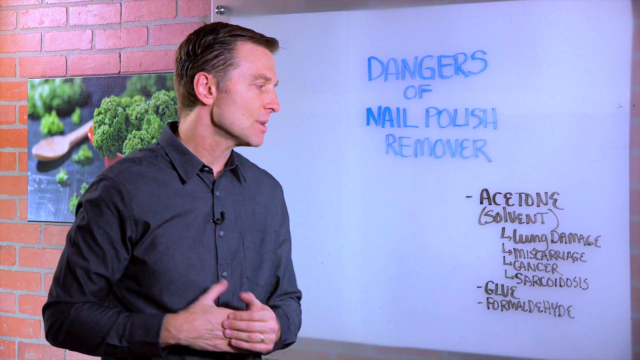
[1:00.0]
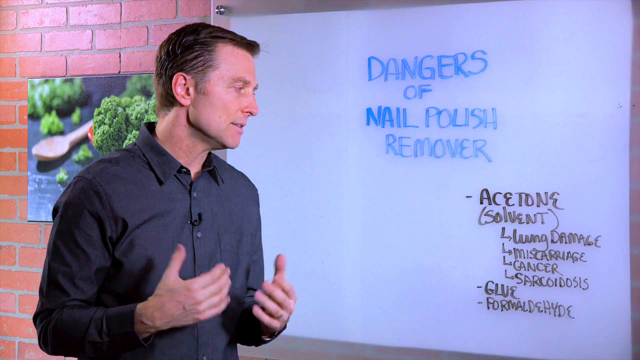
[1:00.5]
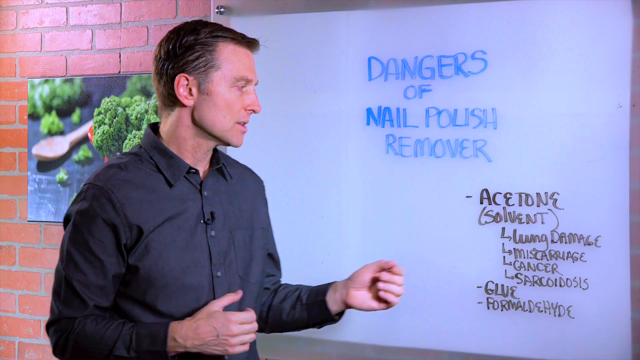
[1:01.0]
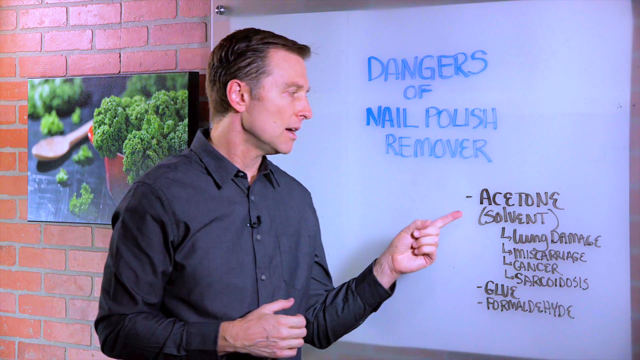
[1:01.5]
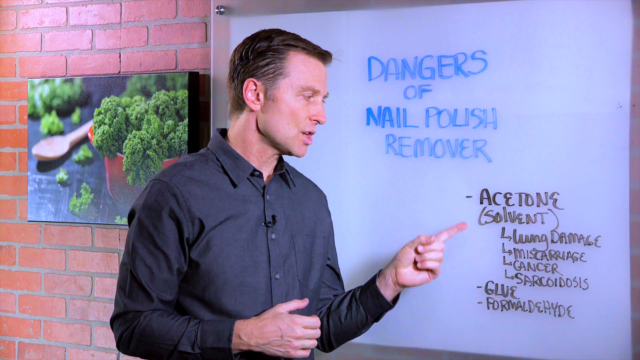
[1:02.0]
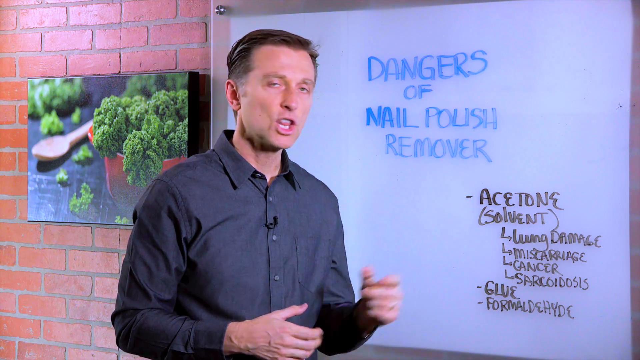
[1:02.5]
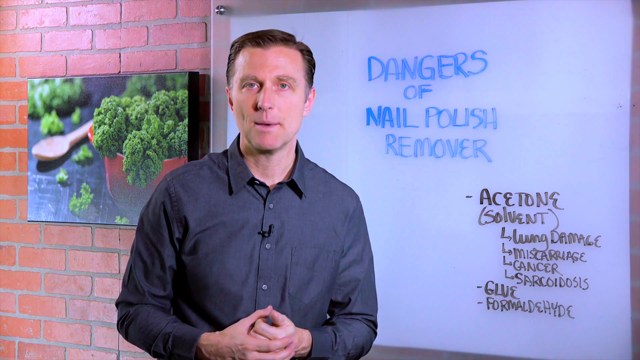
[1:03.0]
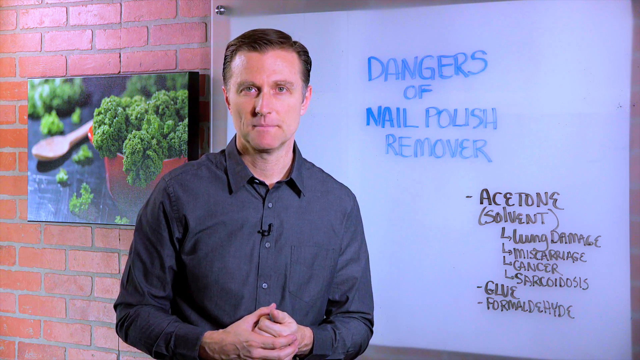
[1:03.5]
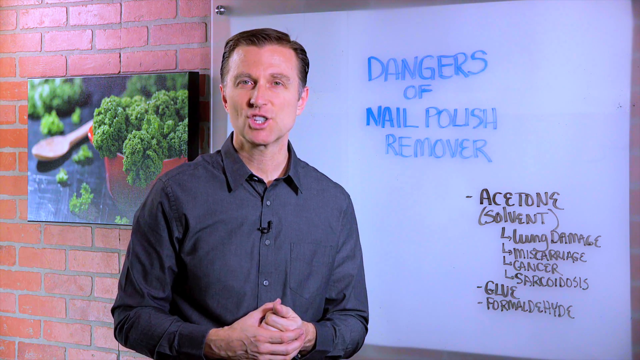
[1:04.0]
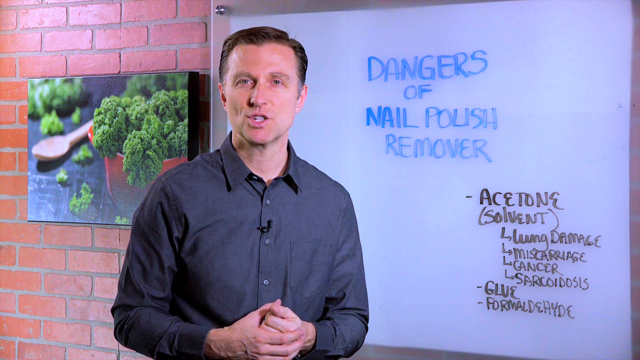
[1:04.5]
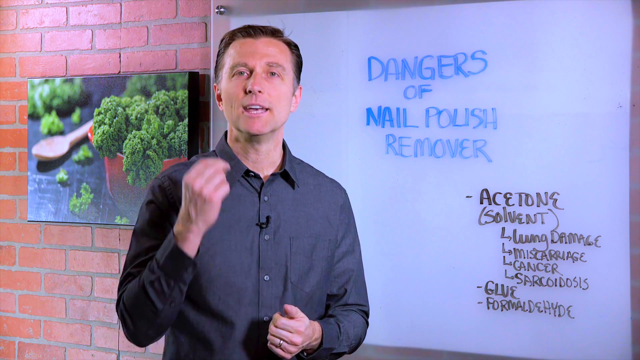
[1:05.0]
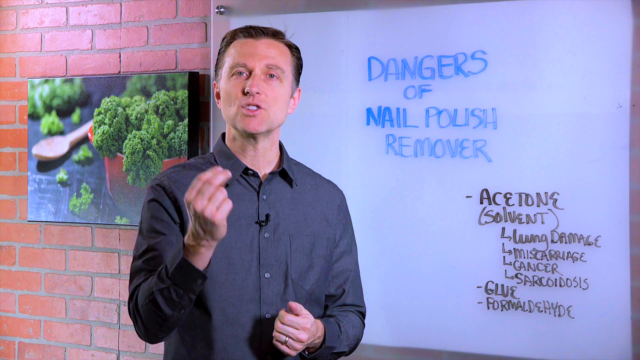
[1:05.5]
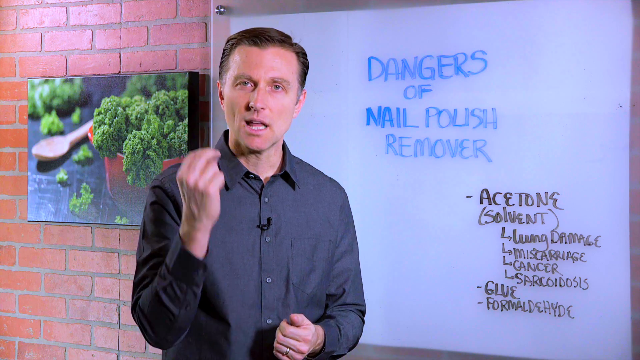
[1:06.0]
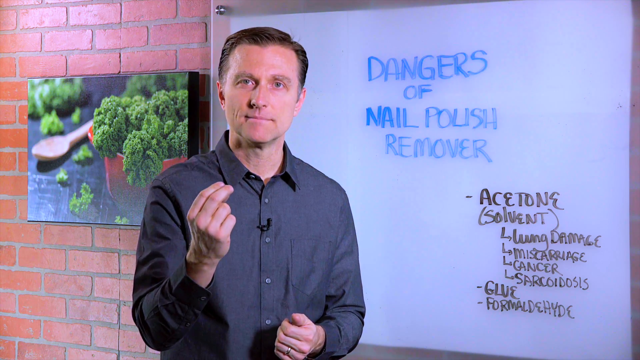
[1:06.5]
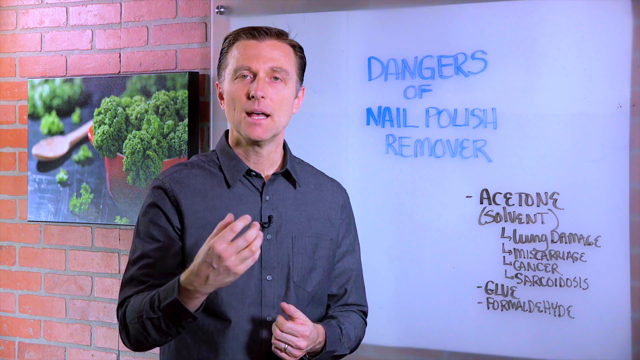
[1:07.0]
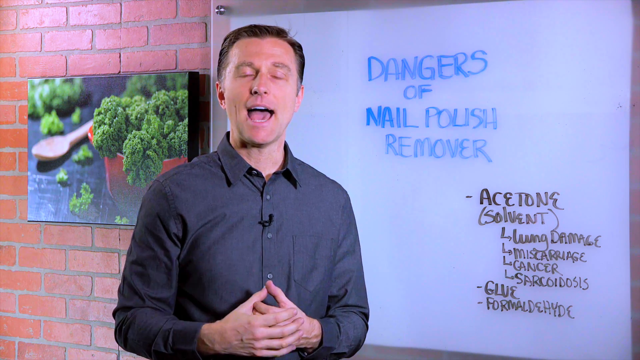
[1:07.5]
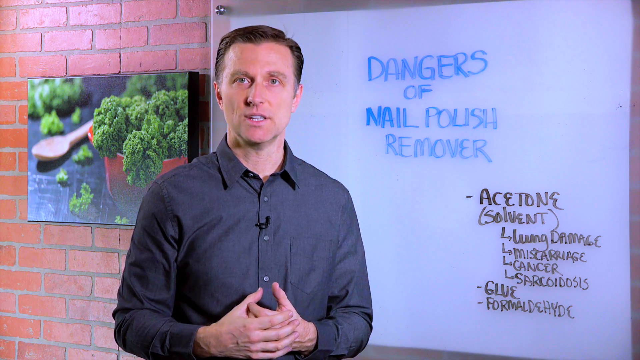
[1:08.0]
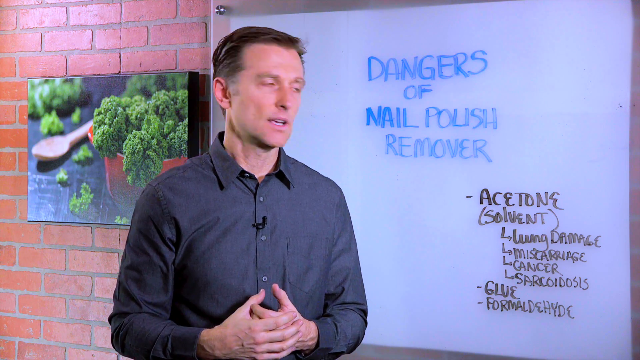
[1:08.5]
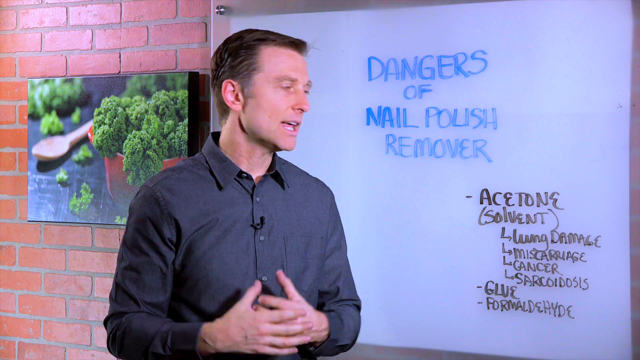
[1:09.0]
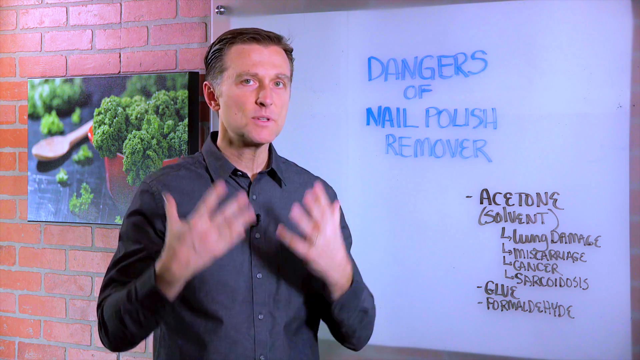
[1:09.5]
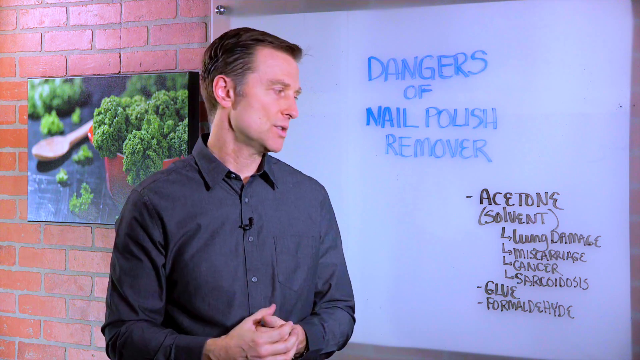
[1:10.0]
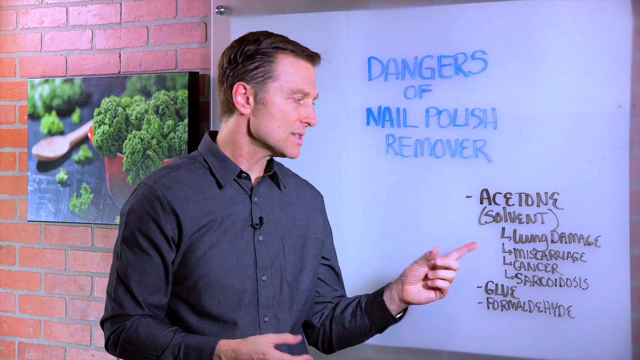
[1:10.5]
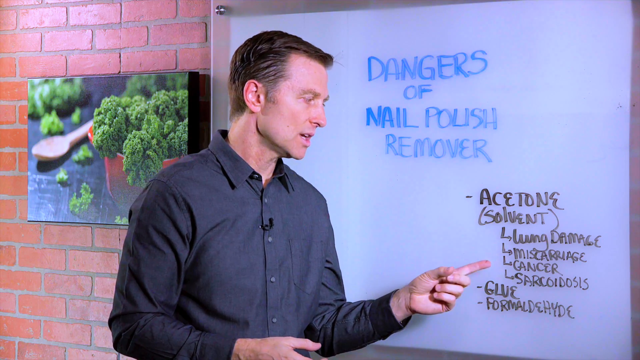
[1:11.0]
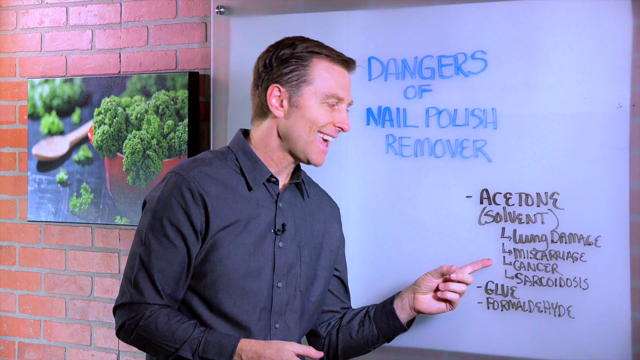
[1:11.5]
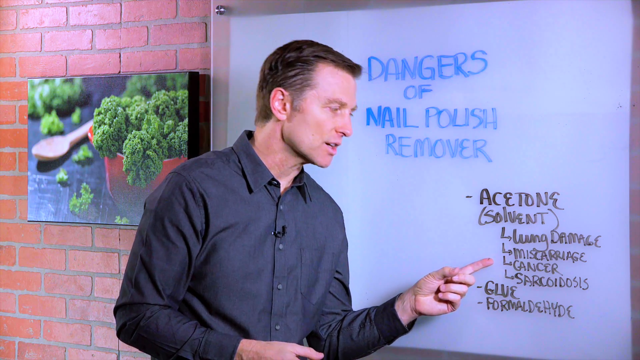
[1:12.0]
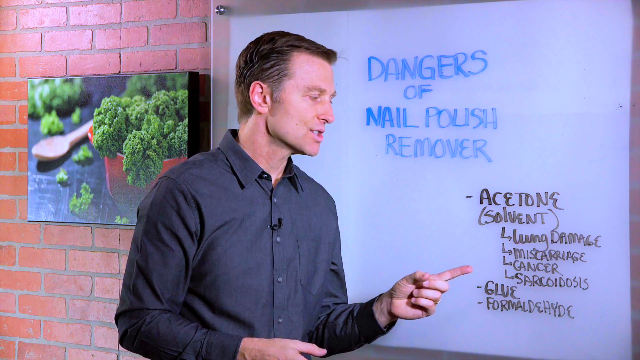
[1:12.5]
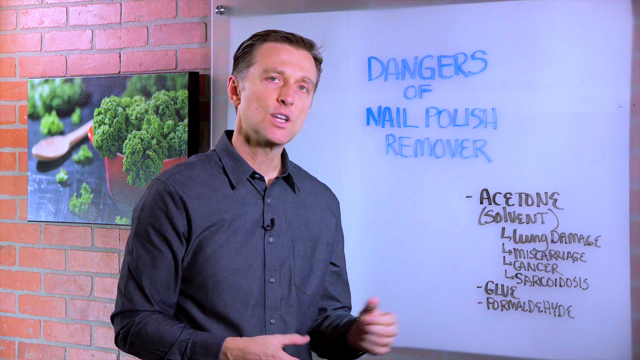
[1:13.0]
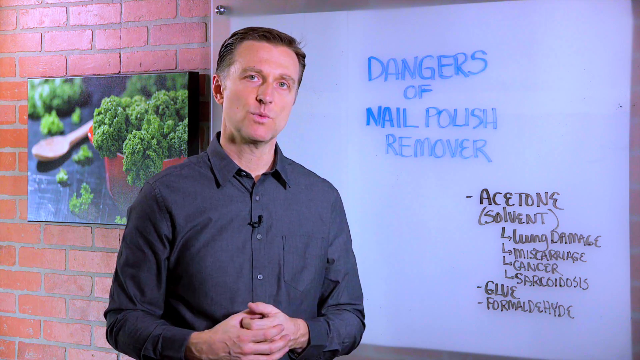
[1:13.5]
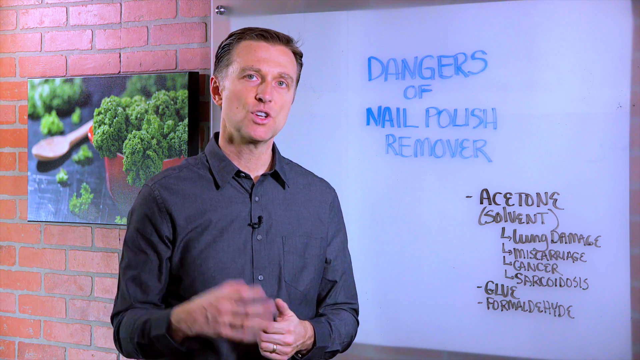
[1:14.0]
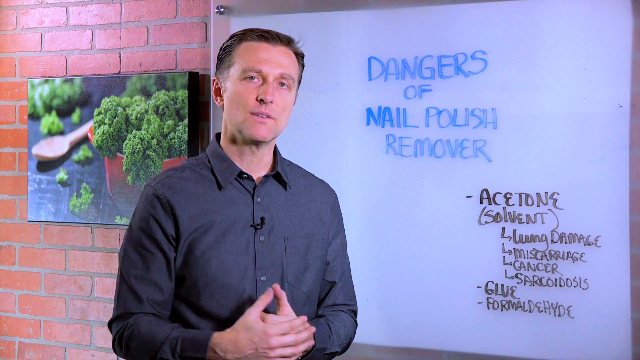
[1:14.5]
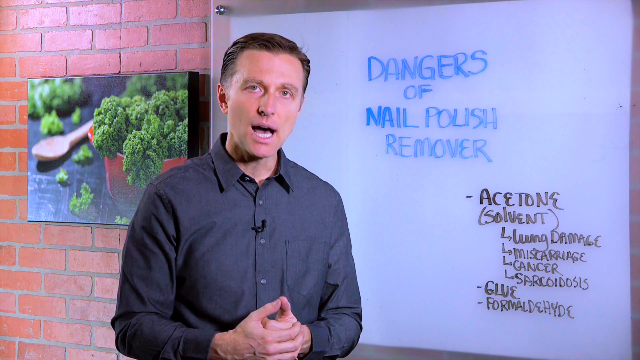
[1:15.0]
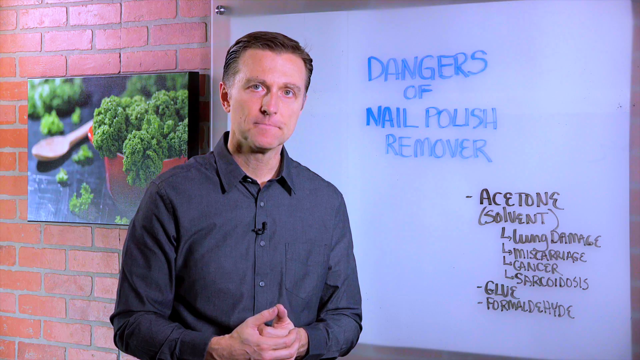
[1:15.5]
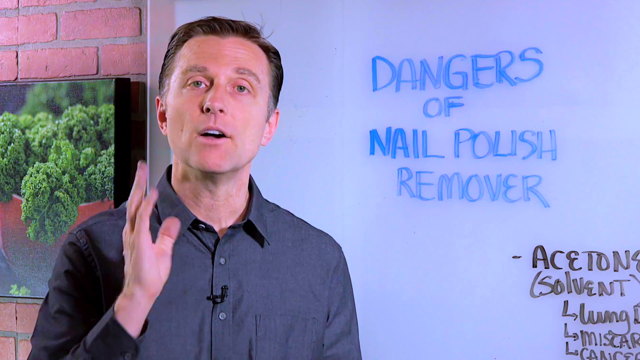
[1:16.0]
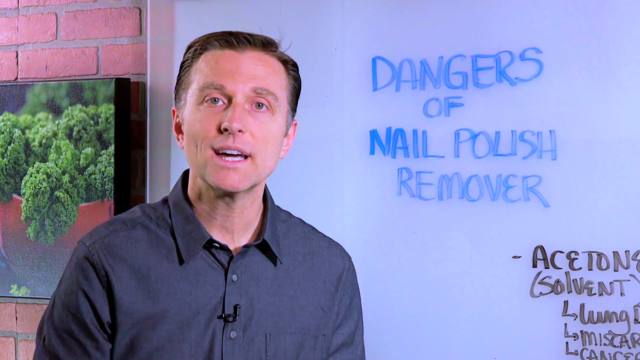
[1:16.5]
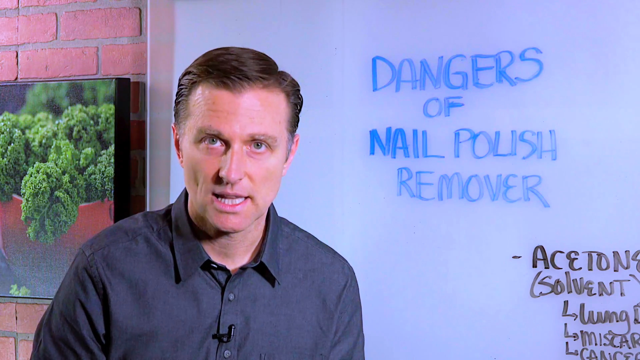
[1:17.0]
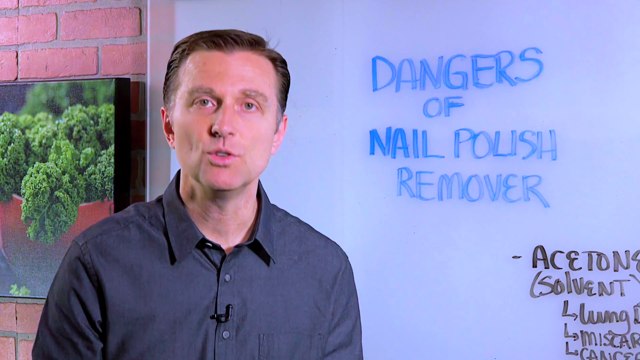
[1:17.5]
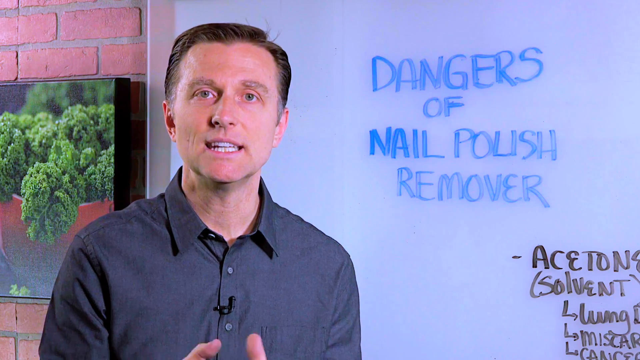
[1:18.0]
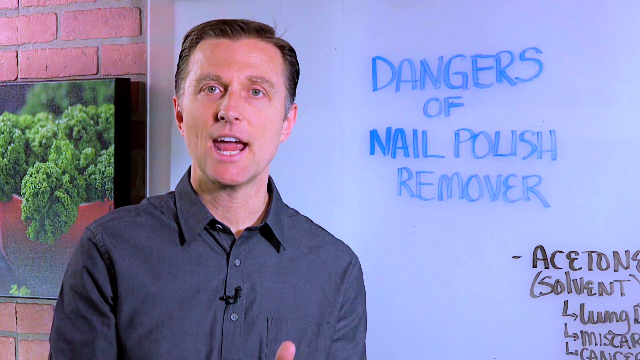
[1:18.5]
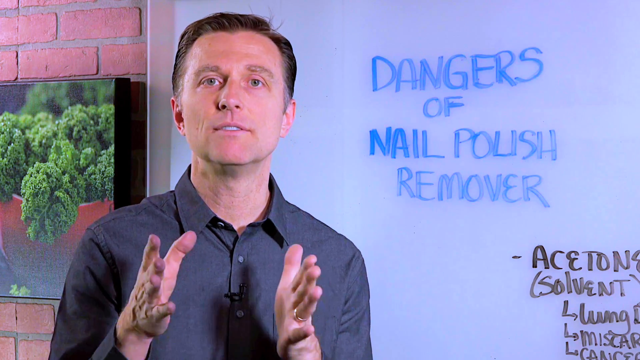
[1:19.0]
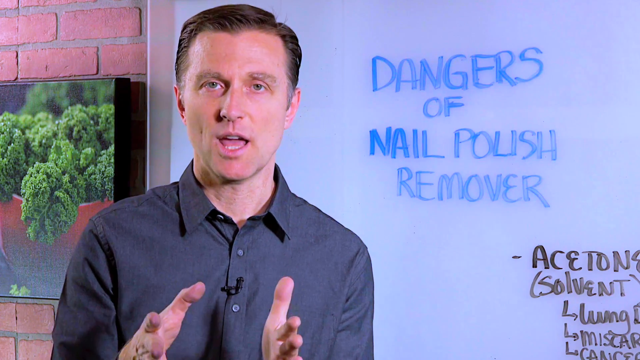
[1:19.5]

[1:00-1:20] The gentleman talks and points to the board again at "acetone" and "solvent," then turns to the camera and continues talking. He gestures with one finger as if pointing and at times uses both hands to emphasize a point. At one point he turns very quickly to the board and points to the words under "solvents": four words, each with its own bullet point, in the order "Lung damage," "Miscarriage," "Cancer," "Sarcoidosis," moving from the top of the list to the bottom. The view then zooms in on him talking, with only part of the white board visible in the background along with the text "dangers of nail polish remover" in blue.